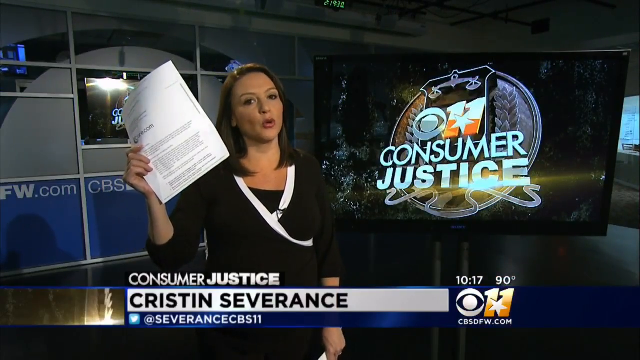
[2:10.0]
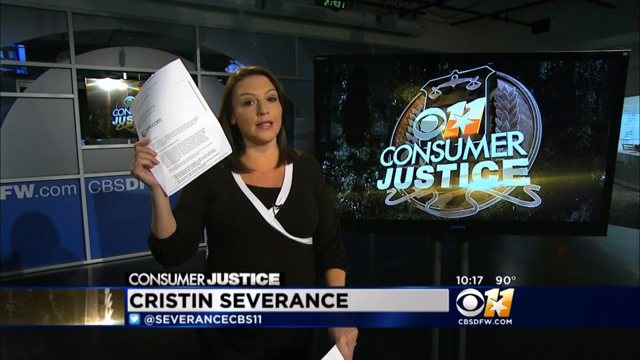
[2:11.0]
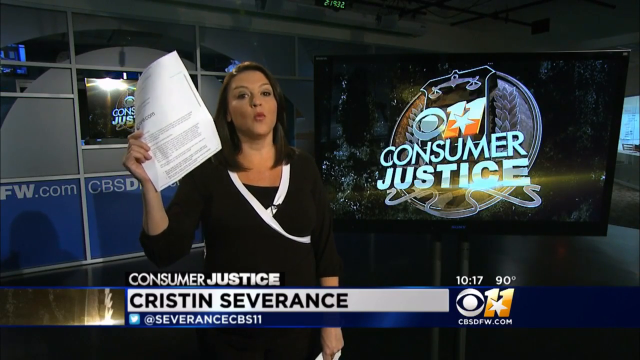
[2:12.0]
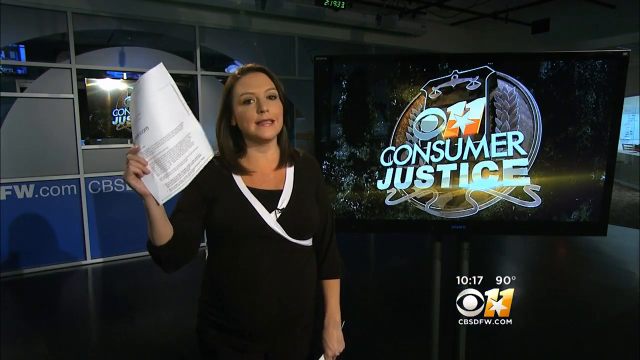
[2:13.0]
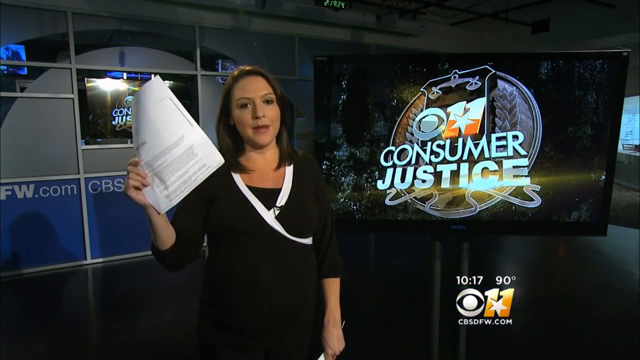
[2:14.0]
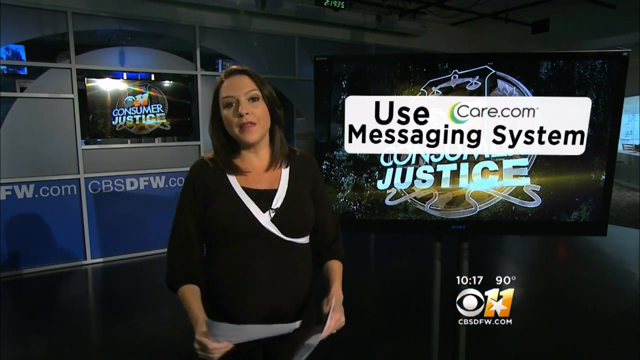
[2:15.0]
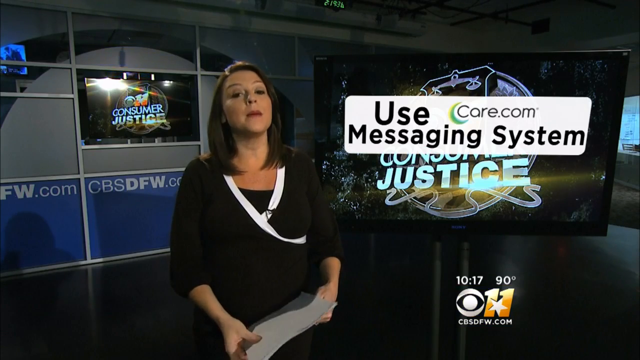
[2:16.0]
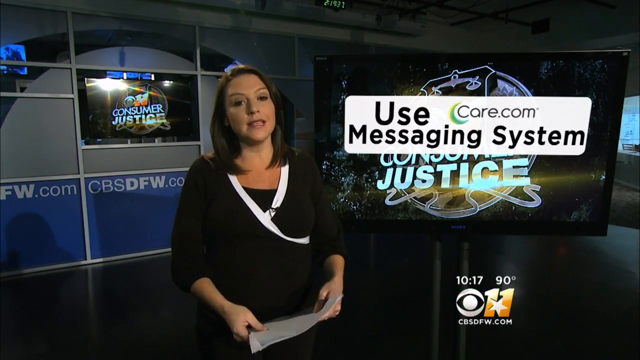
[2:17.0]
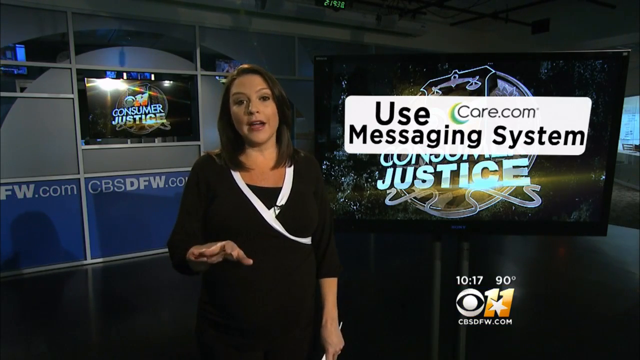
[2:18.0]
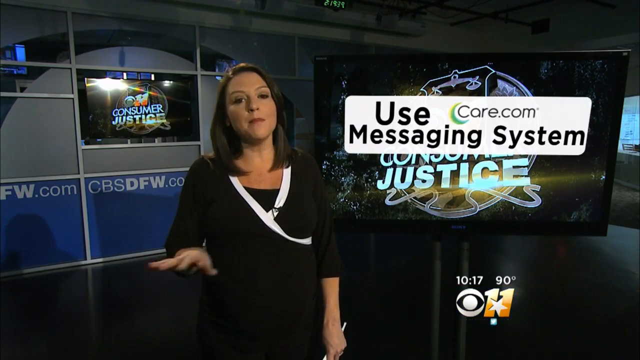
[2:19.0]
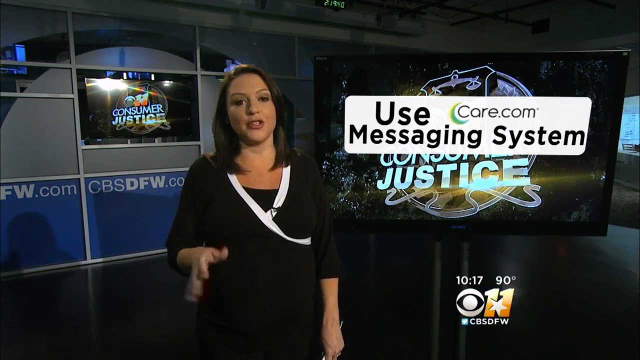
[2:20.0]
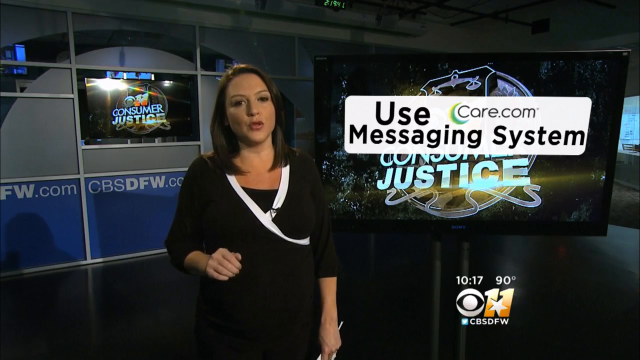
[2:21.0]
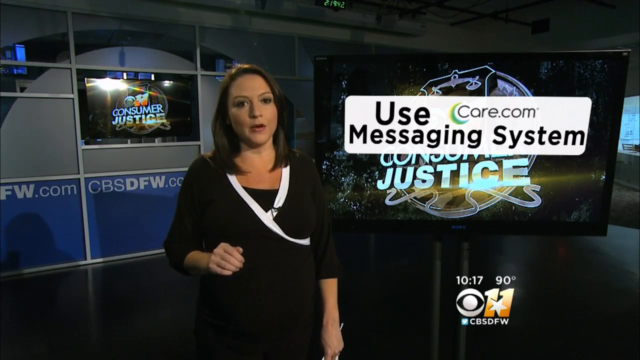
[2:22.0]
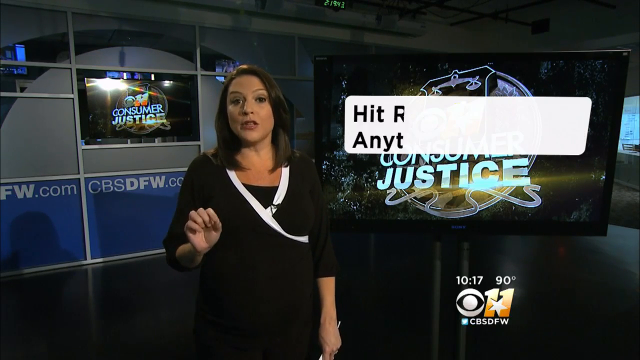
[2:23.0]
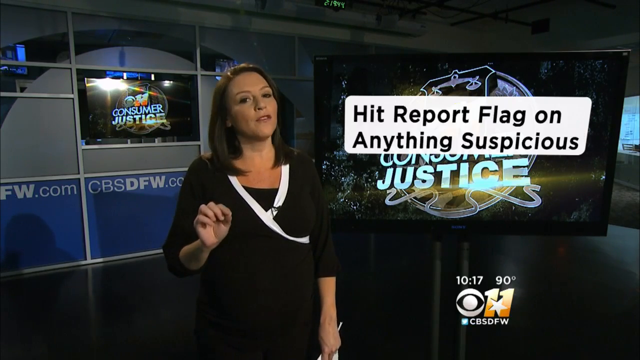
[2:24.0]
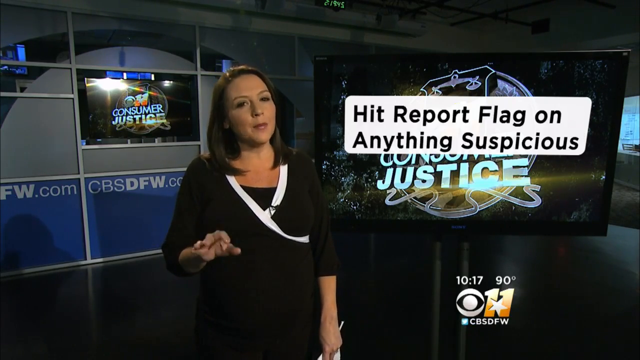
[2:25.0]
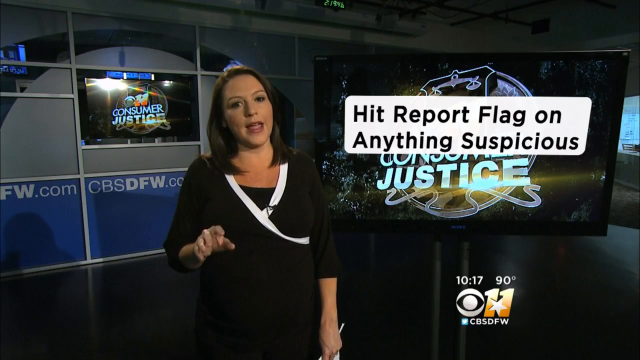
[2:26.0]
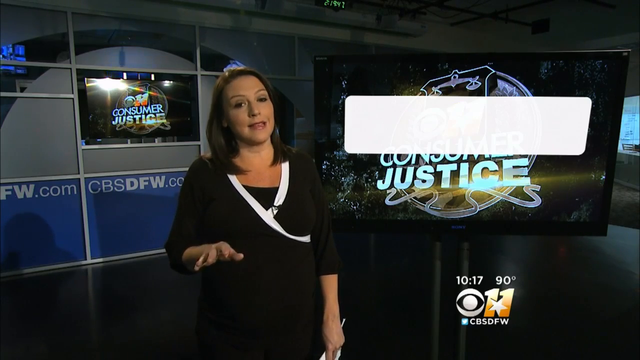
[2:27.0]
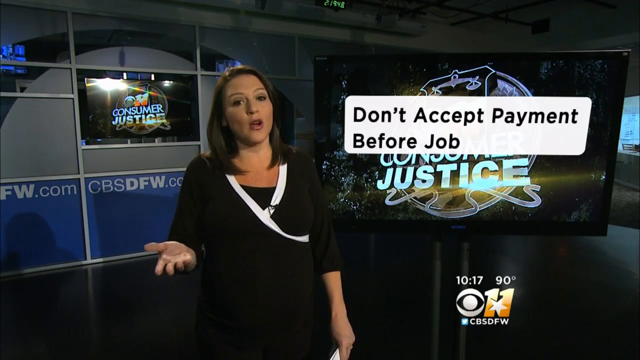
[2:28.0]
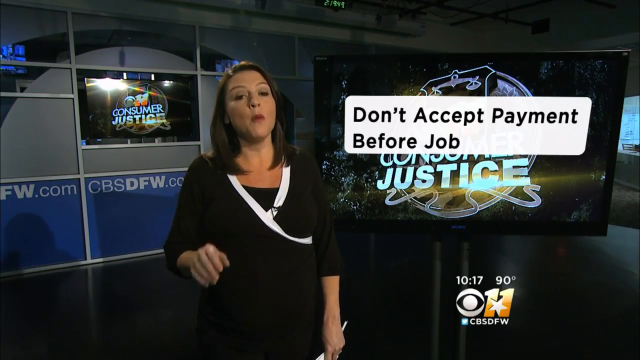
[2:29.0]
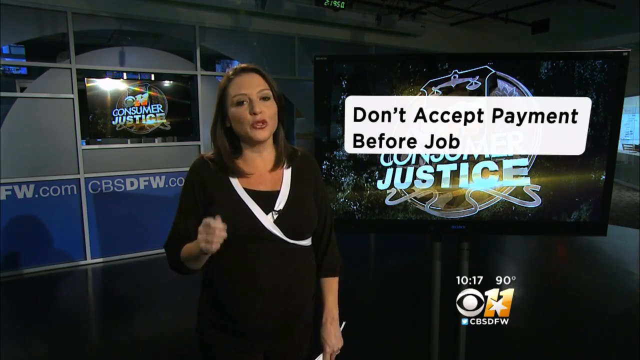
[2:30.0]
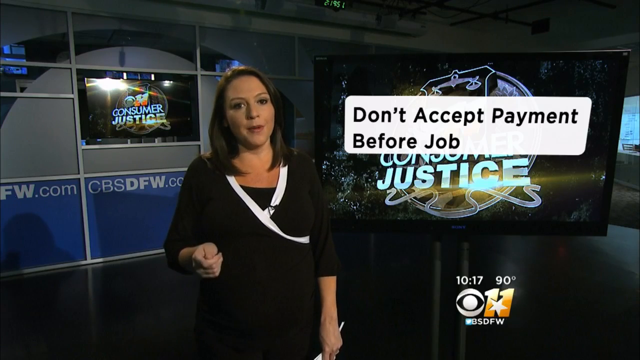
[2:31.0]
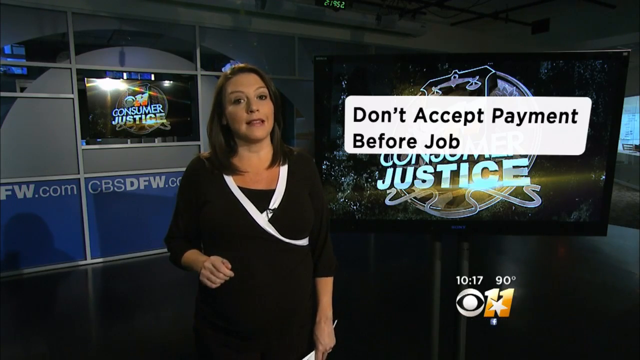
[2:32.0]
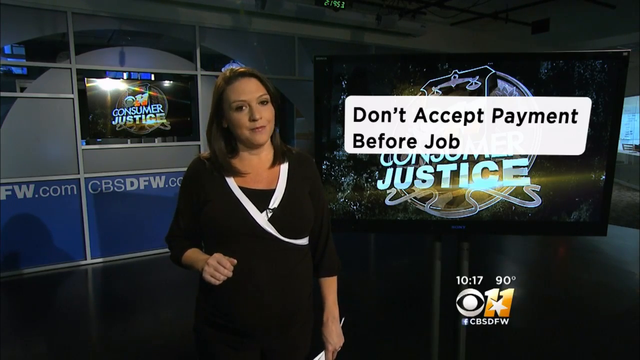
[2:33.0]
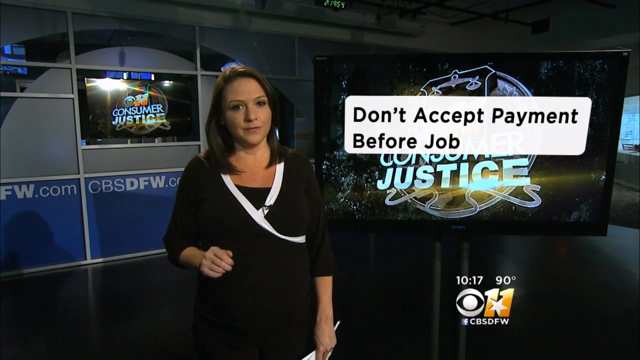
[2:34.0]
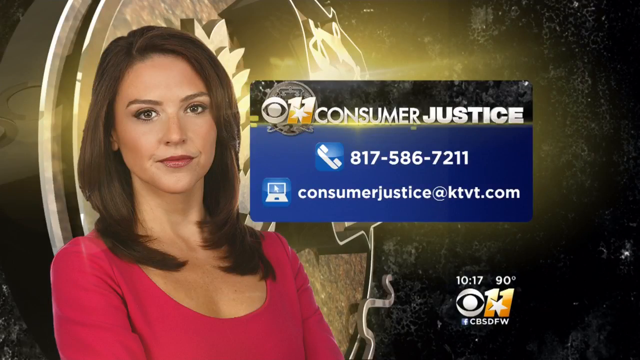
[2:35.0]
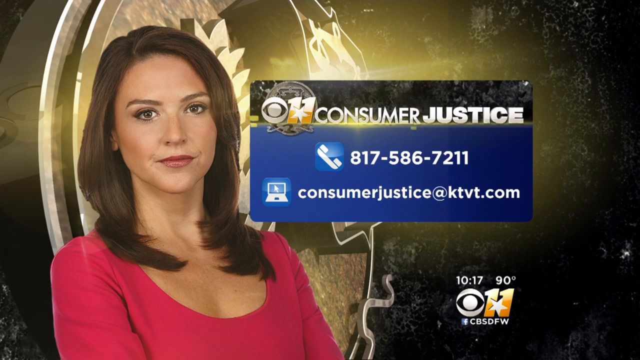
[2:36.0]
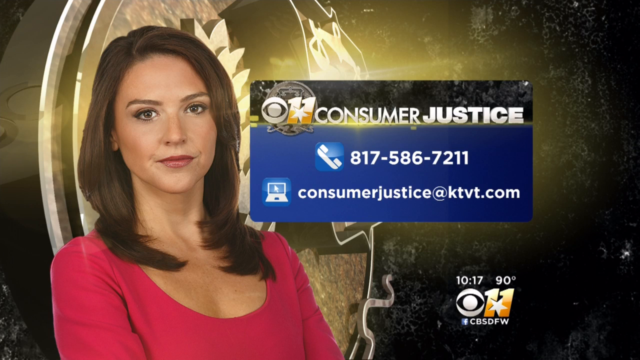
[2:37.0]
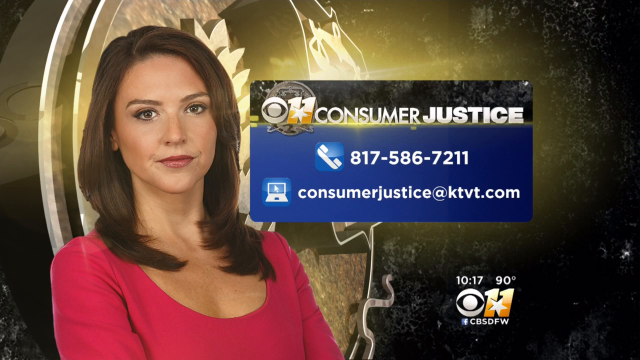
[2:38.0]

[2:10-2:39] Kristen Servants is seen on screen in the channel 11 news-style video, holding a piece of paper and wearing a sort of dress. A screen then says "use messaging system, care.com," followed by information about care.com, including hitting report on anything suspicious and not accepting payments before a job is accepted. The consumer justice report shows a number and a website, and ends with the female talking.